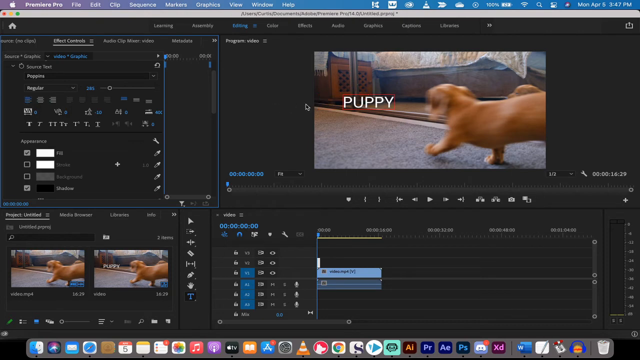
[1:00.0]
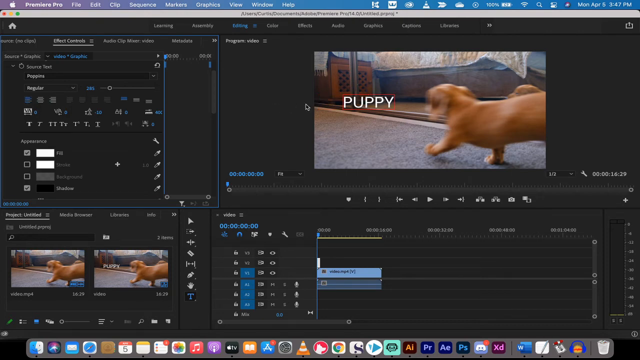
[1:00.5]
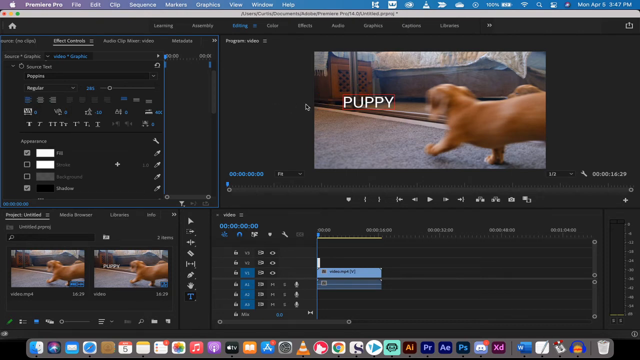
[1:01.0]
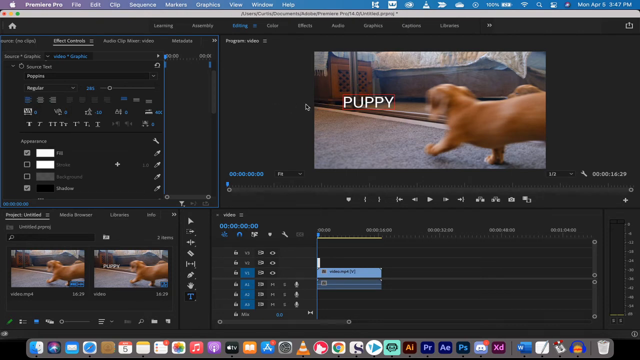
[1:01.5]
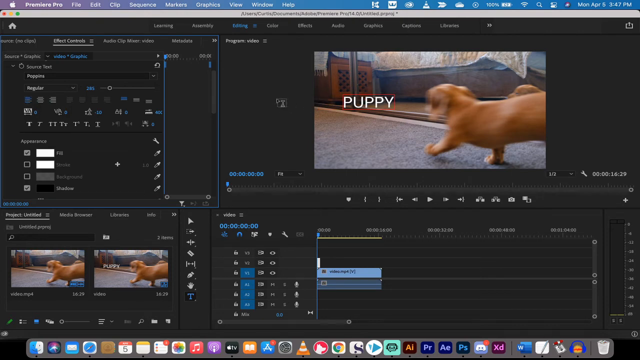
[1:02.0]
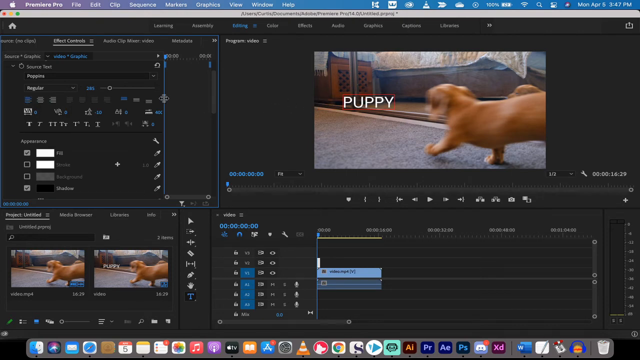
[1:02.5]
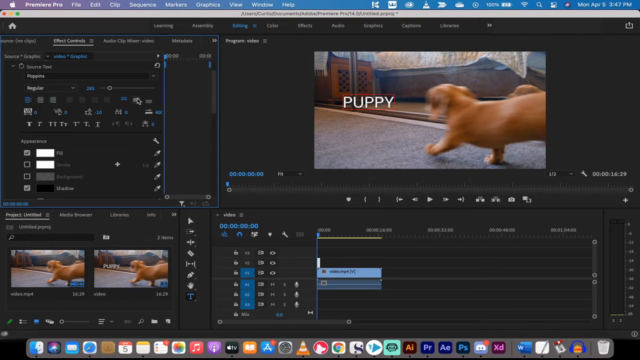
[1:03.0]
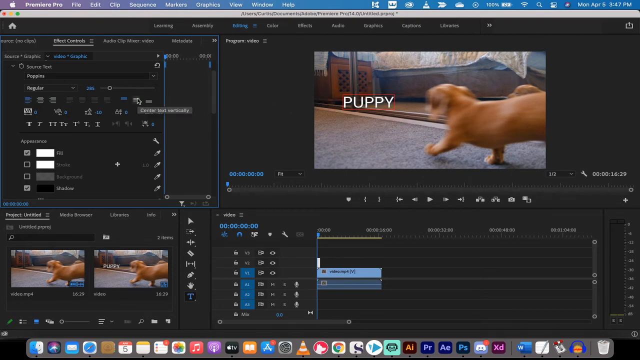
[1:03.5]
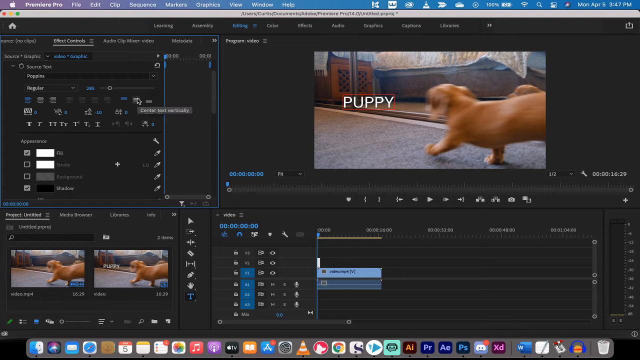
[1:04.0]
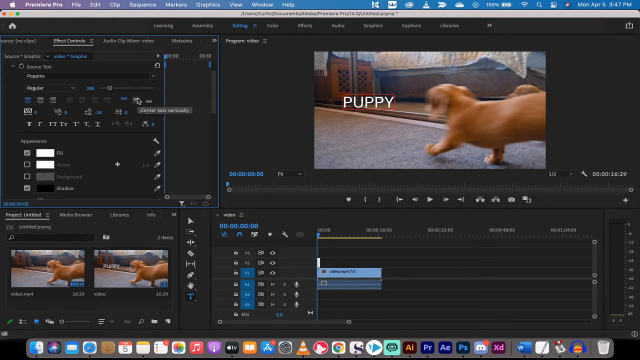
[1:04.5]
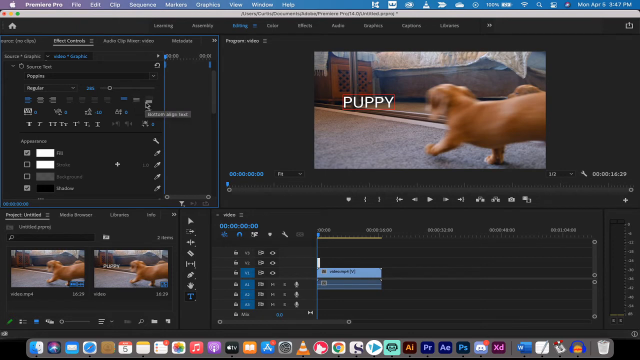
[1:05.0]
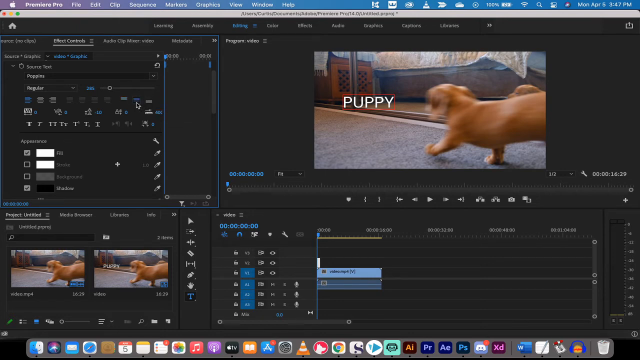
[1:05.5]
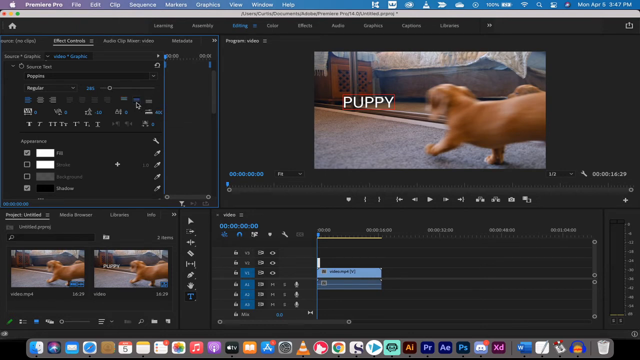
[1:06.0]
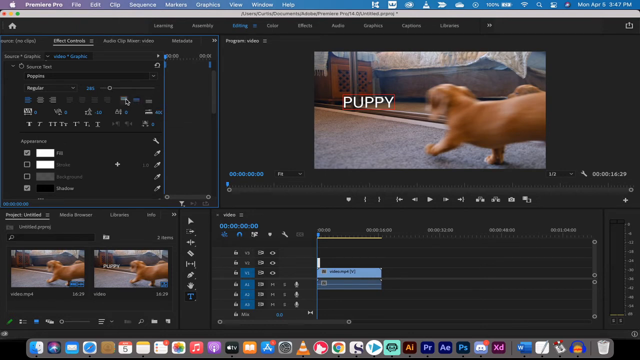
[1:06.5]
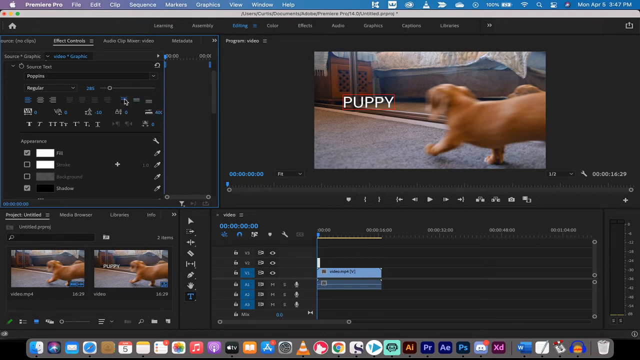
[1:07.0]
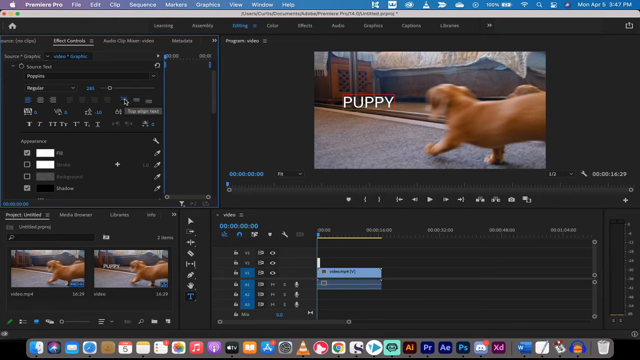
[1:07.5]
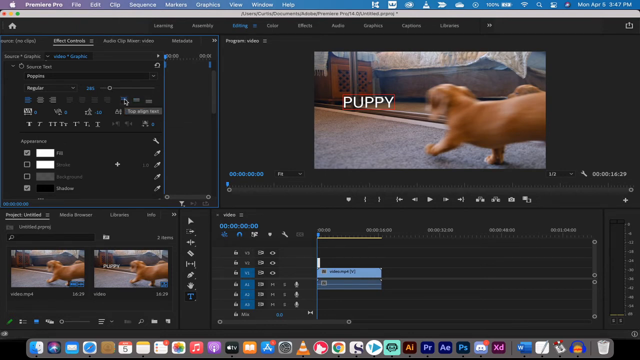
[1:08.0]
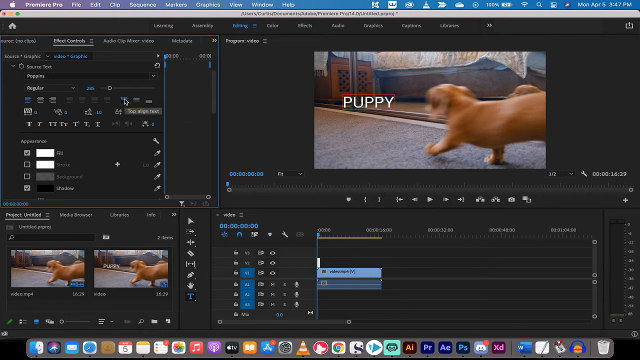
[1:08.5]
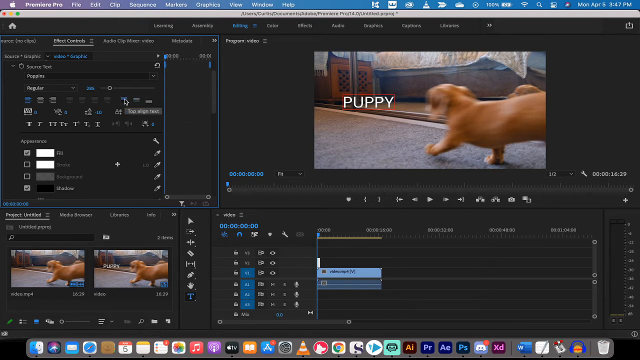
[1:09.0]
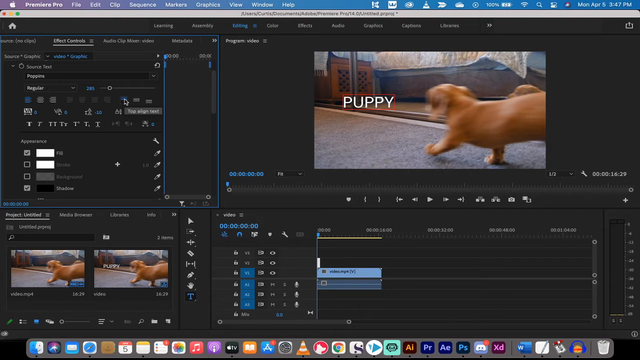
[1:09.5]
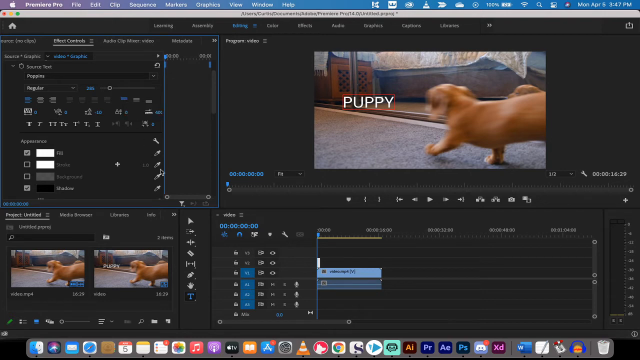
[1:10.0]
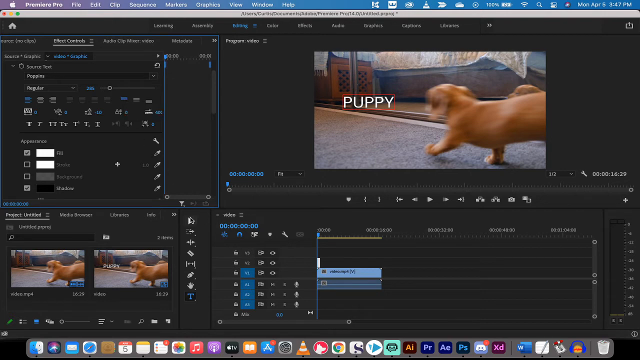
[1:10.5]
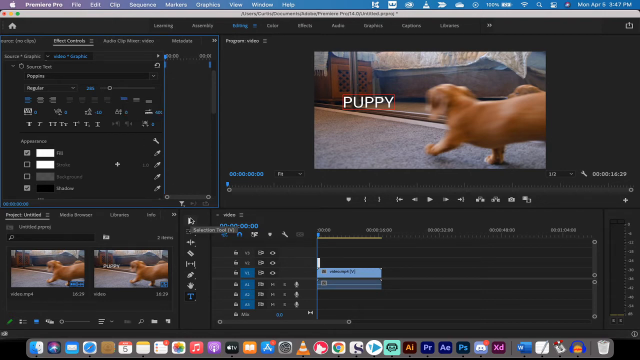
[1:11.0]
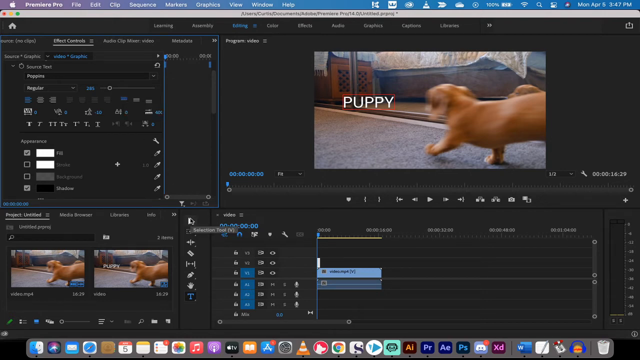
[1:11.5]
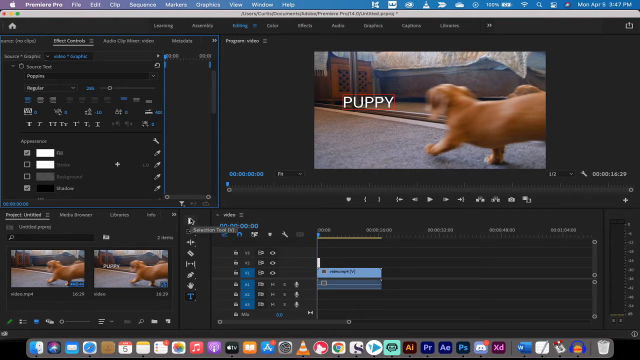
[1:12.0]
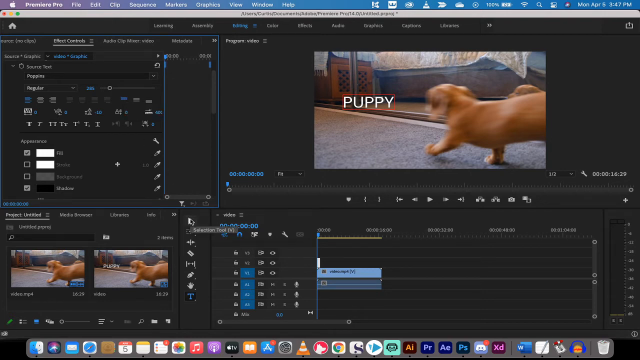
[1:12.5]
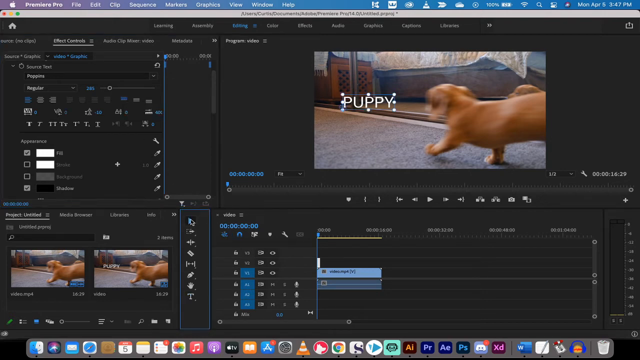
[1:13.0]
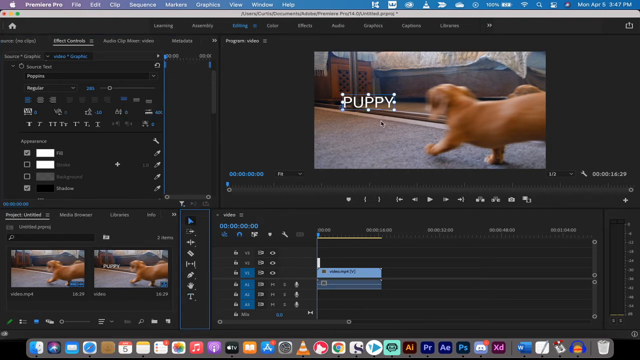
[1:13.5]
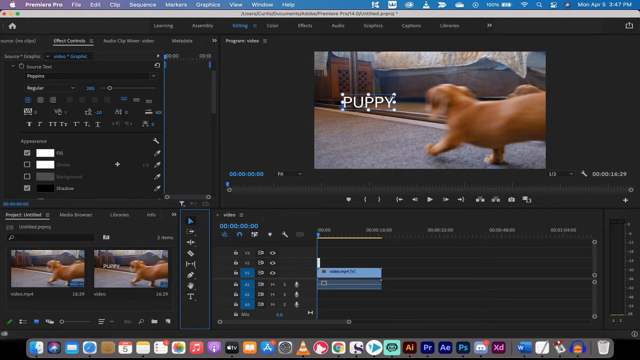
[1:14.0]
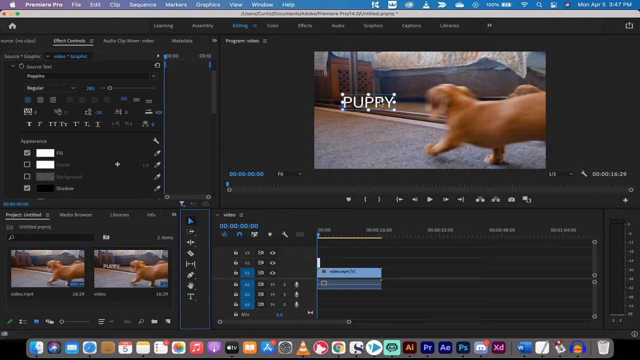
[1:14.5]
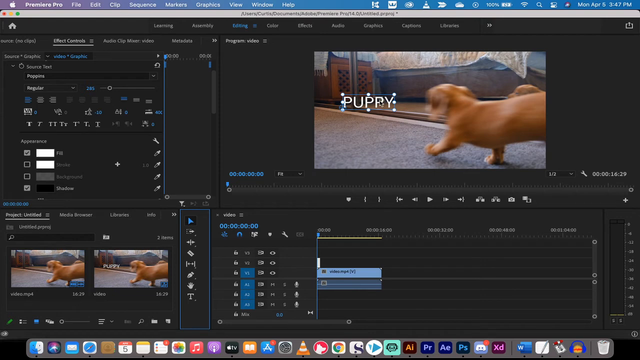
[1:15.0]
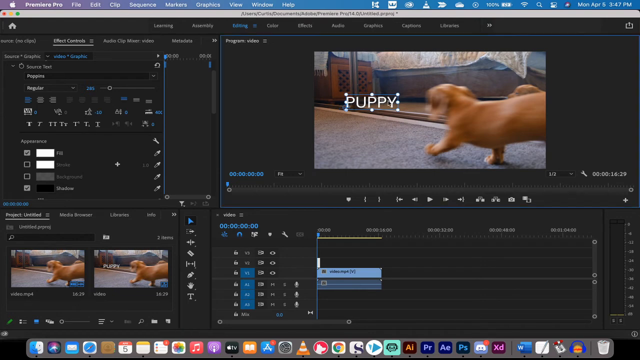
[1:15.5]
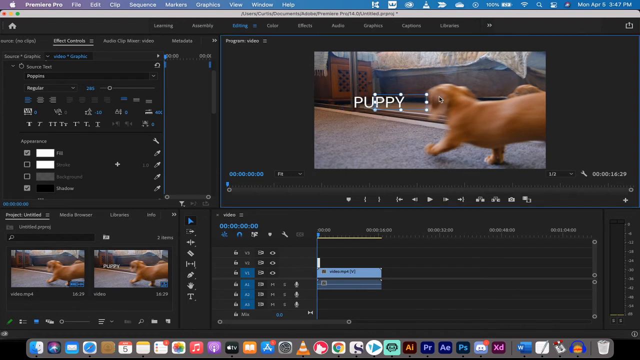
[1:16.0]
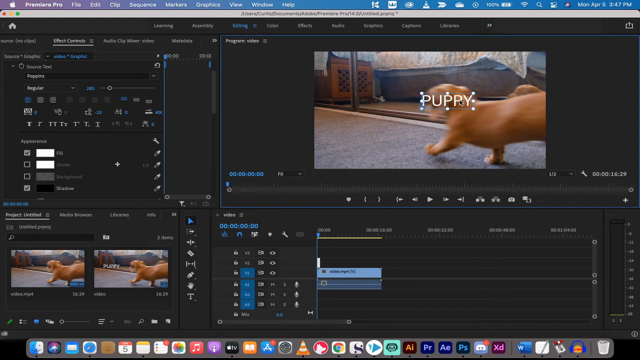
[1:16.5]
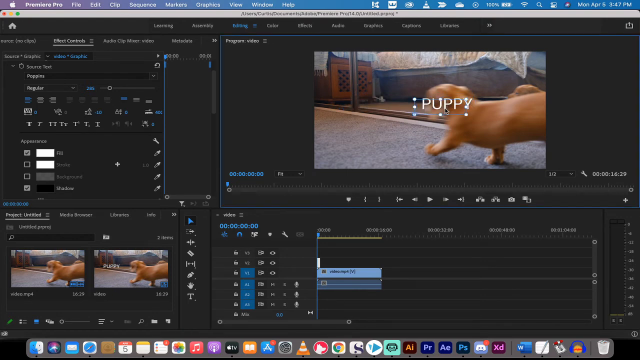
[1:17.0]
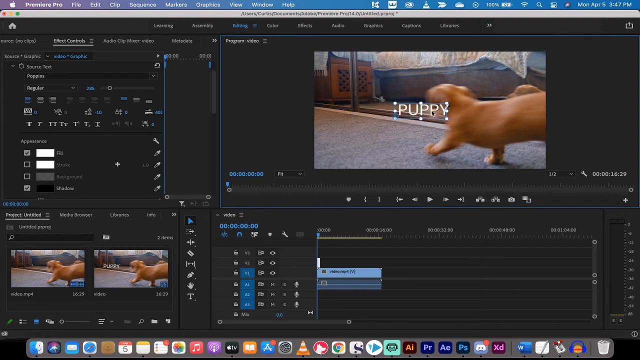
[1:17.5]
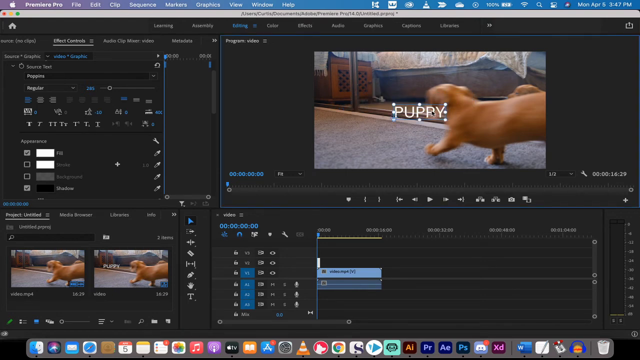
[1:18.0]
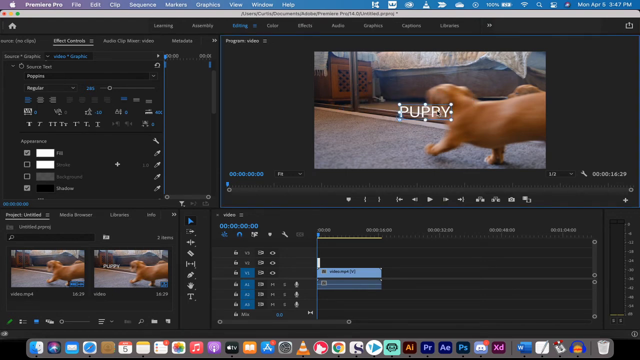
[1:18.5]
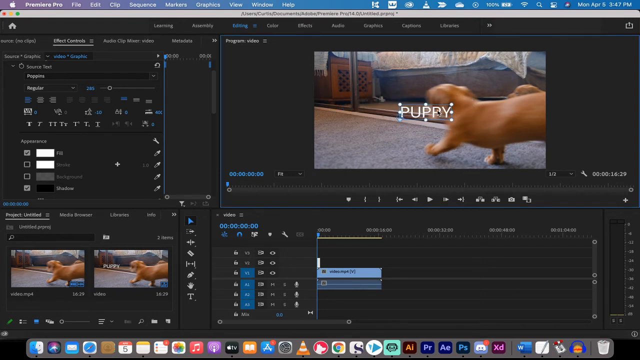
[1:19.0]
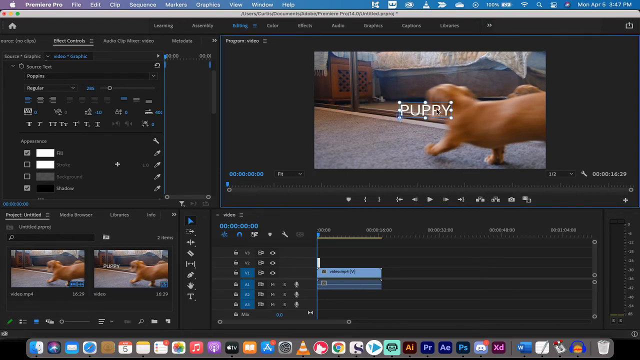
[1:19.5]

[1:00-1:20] Premiere Pro is open, with the video preview and the additions visible on the top right. The red box is still there with the word "PUPPY" inside in white, all capital letters. On the left, the effects control tab is selected, showing options for the appearance: two white boxes, the first selected with its tick box filled in and the one under it not selected, then a gray box that is also not selected, and finally a black box marked for shadow that is selected. The cursor moves from the program video section on the right toward the video preview itself, then back to the left where the effects control tab is. It hovers over a few options, clicks the first one and then the one to the left, and moves away again.